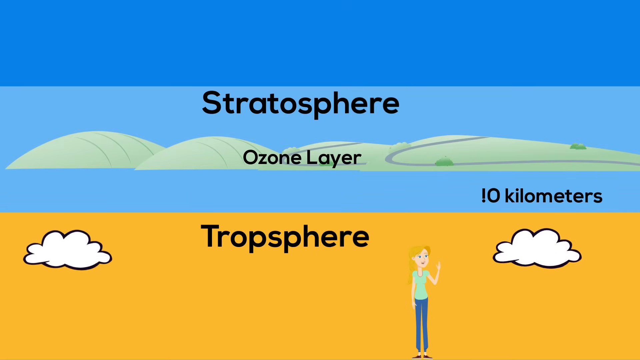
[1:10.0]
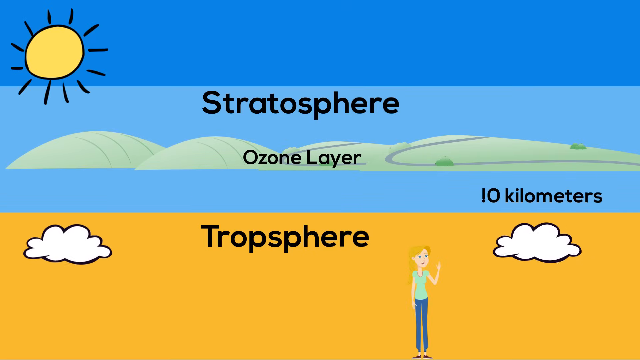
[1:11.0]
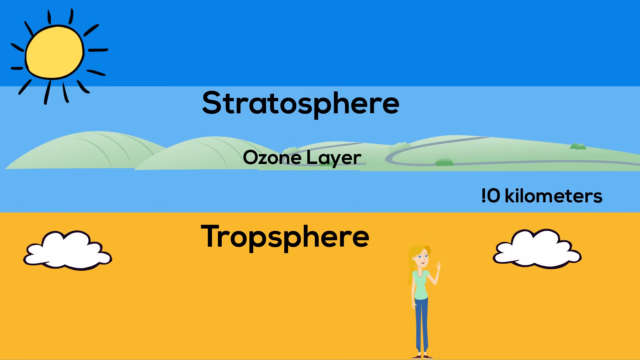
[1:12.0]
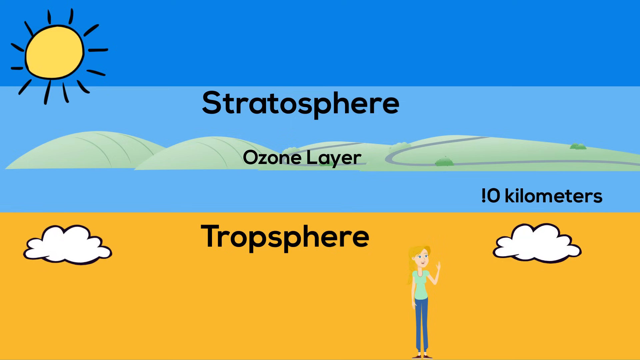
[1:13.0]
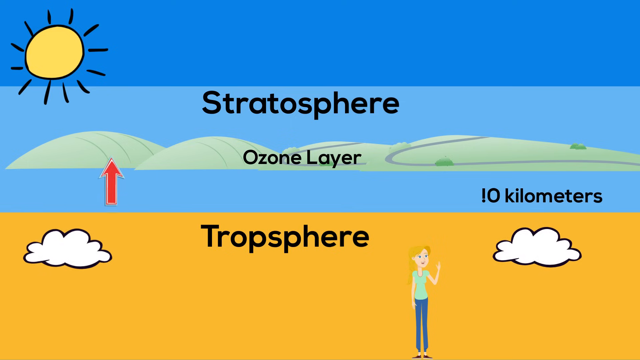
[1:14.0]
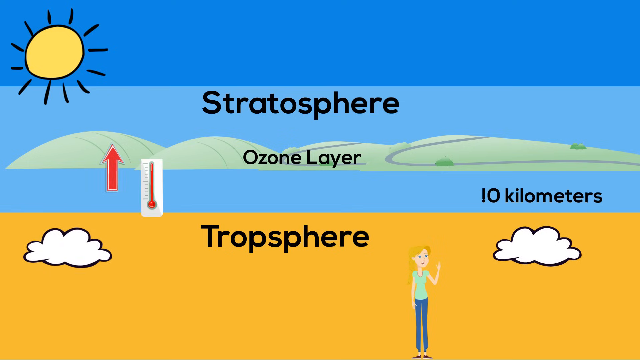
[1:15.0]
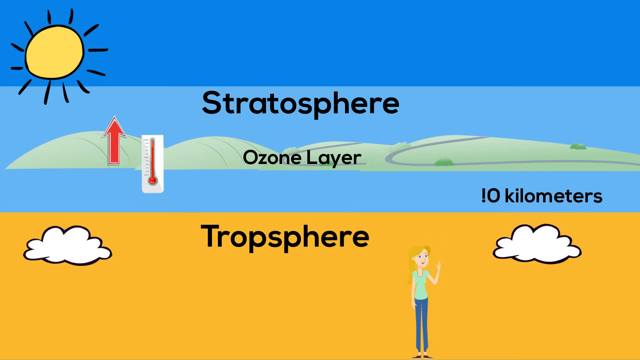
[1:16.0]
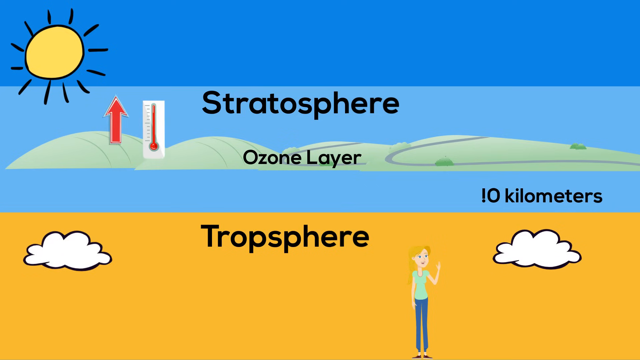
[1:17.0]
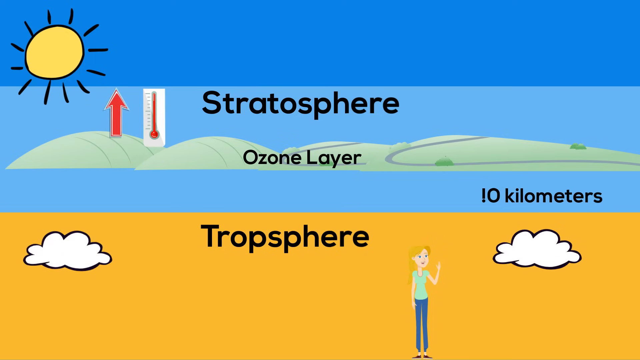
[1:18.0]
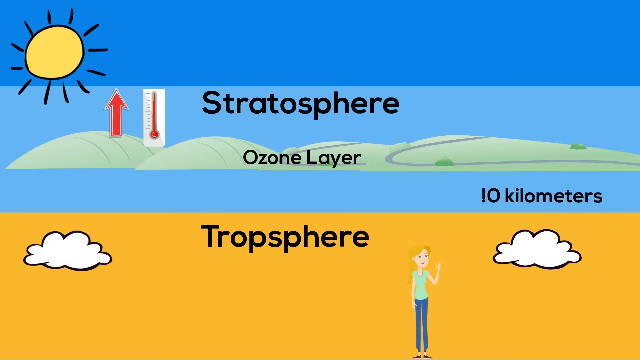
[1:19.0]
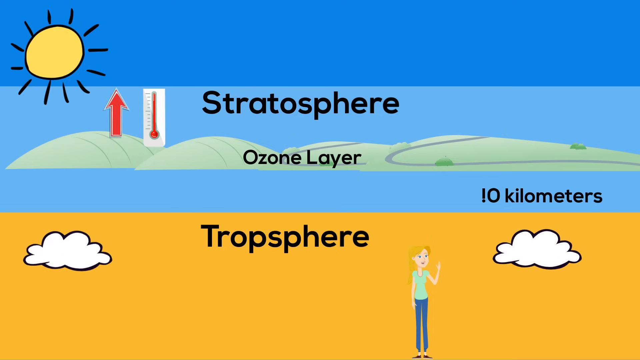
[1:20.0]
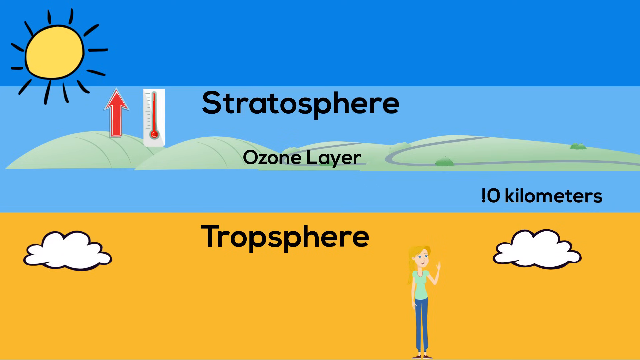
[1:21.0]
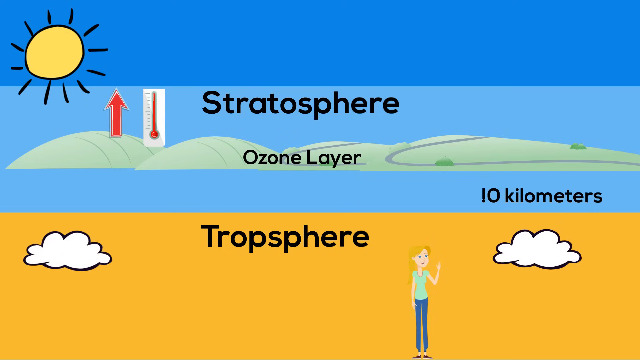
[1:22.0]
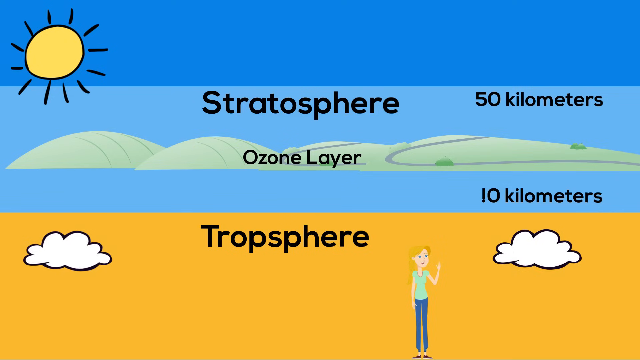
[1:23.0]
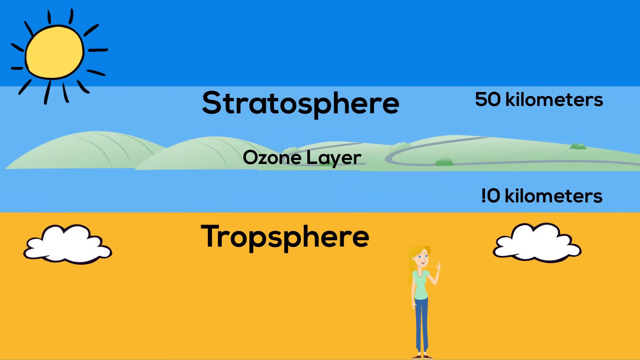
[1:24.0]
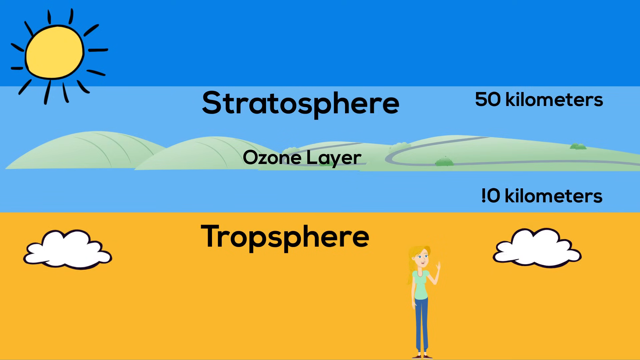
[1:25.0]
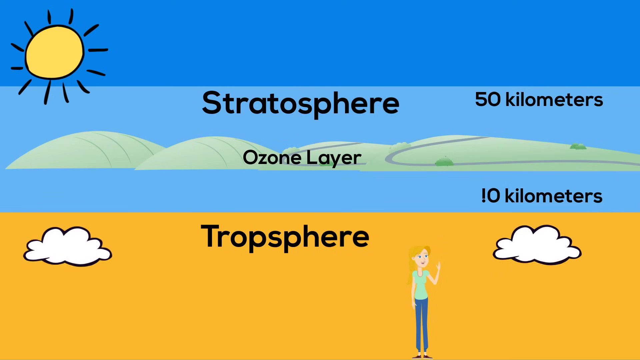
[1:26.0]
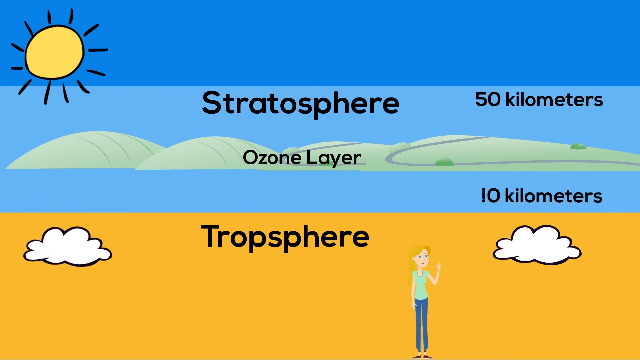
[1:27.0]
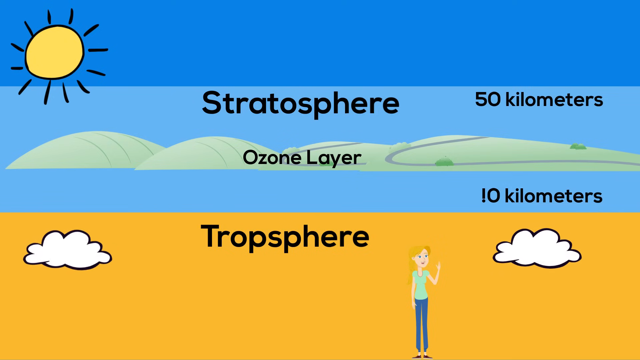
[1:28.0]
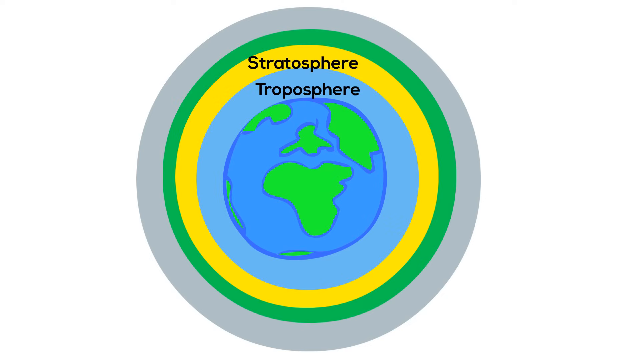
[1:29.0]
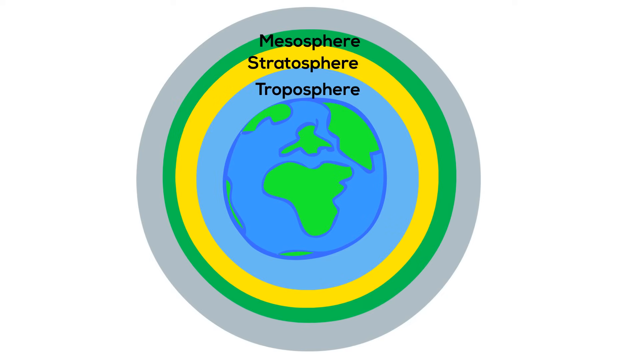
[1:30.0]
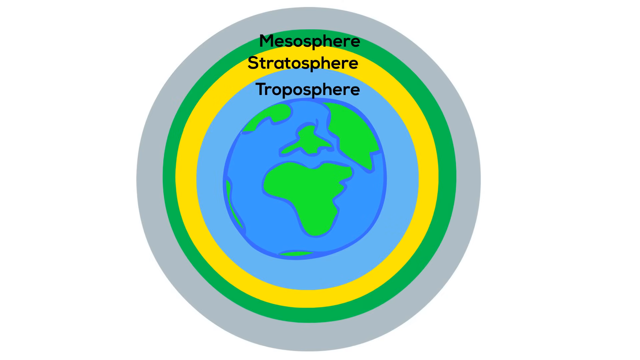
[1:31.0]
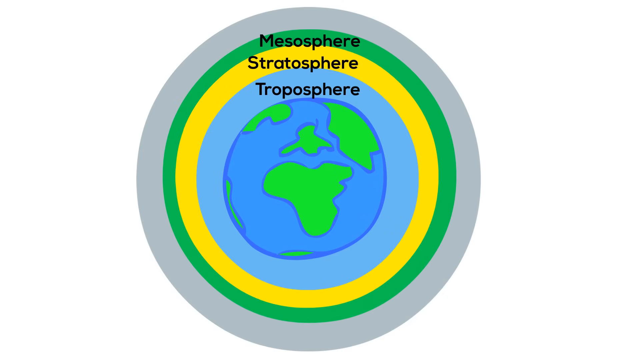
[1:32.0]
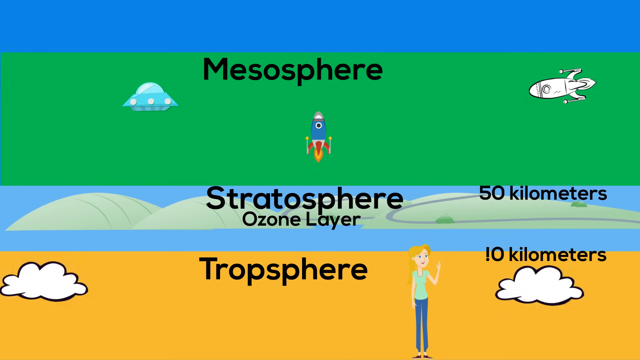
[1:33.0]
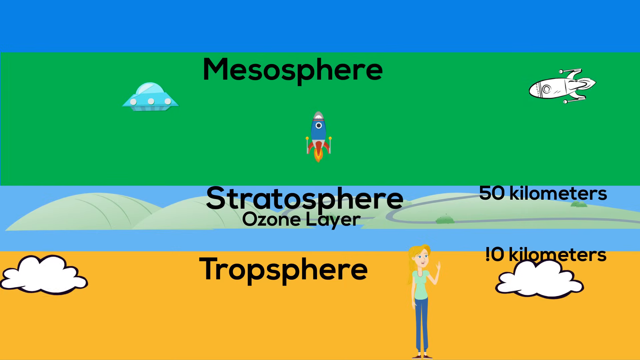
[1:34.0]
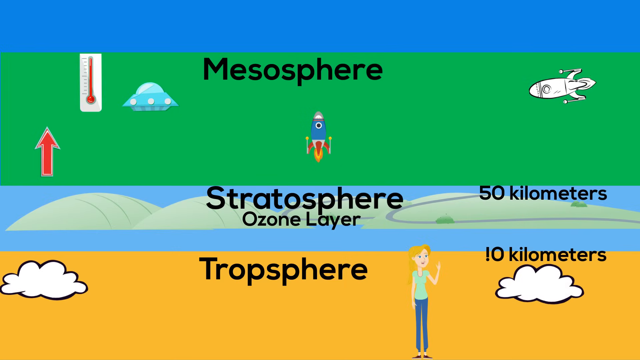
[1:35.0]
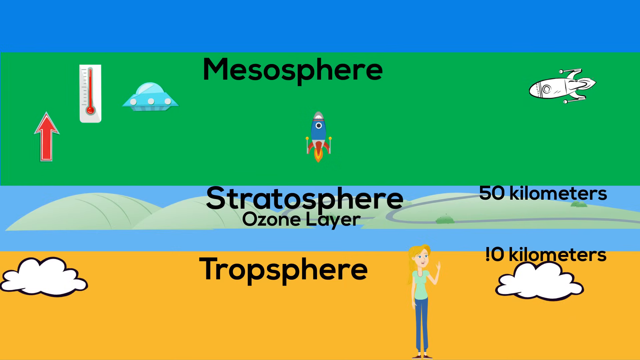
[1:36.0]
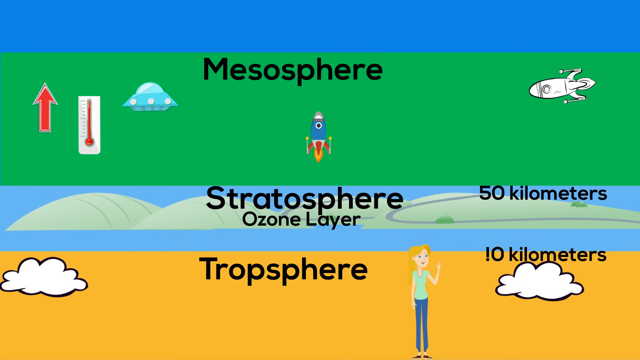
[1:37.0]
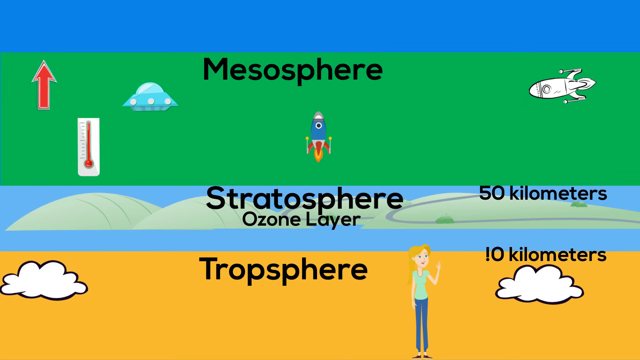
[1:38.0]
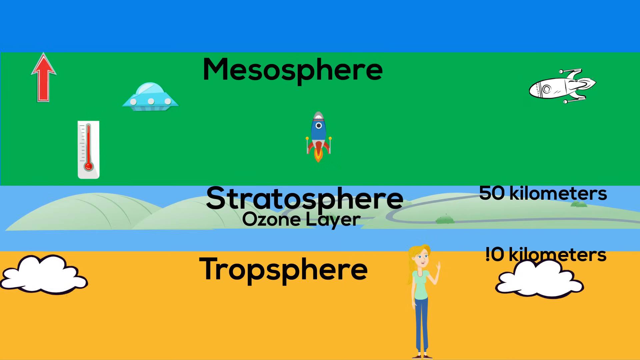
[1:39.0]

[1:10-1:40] Two layers are shown. The troposphere is at the bottom in the same yellowish-orange color, and the stratosphere occupies the bluish top portion, light blue in the middle and dark blue at the very top. The sun is at the top left, shining down on both layers. Within the stratosphere is a smaller, cloudy green layer called the ozone layer. An arrow comes from the troposphere, goes through the ozone layer, and into the stratosphere. The troposphere is marked as 10 kilometers from ground and the stratosphere as 50 kilometers from ground.